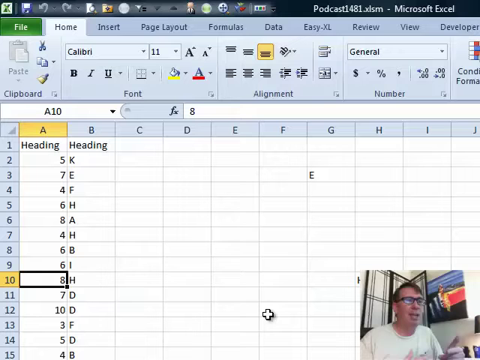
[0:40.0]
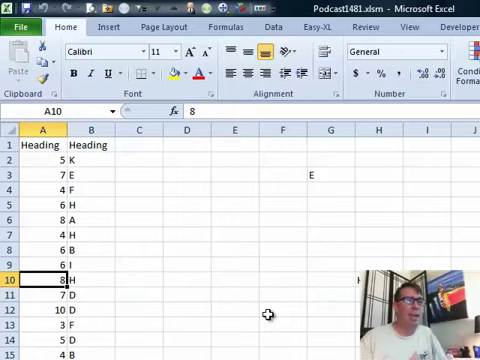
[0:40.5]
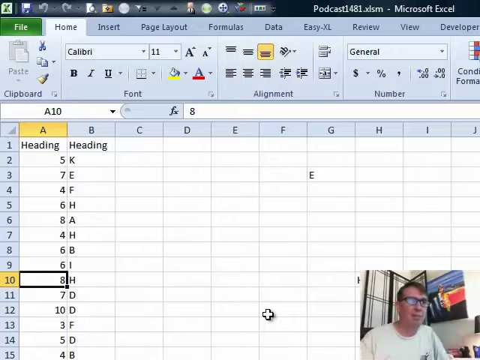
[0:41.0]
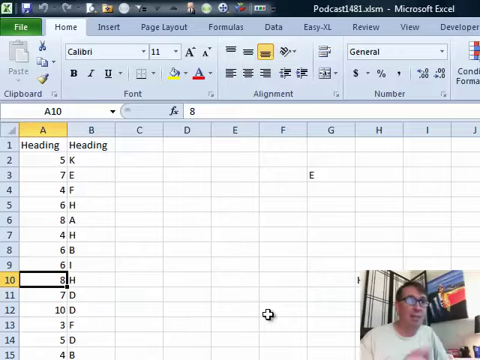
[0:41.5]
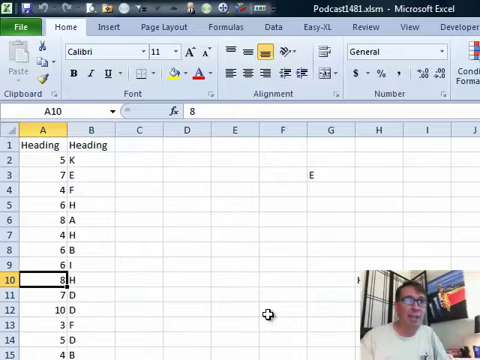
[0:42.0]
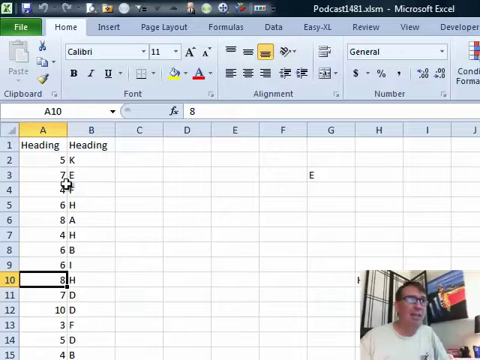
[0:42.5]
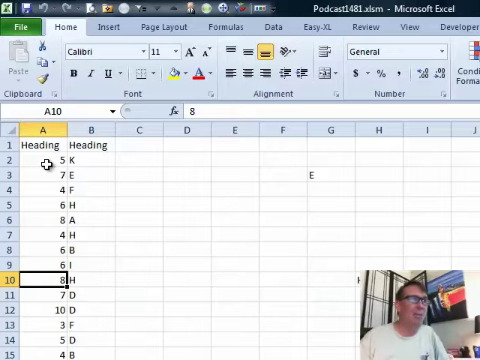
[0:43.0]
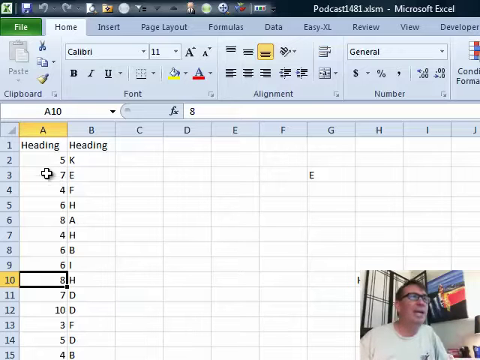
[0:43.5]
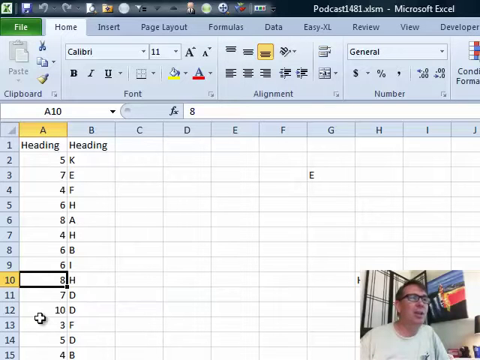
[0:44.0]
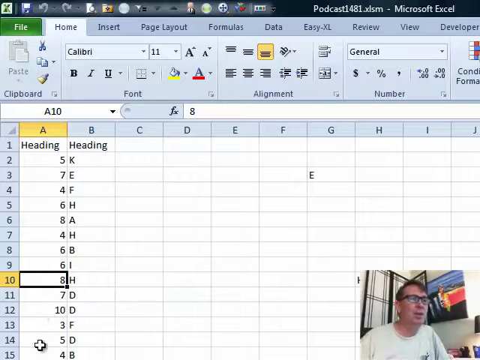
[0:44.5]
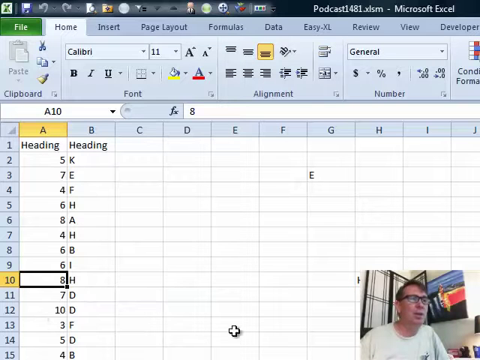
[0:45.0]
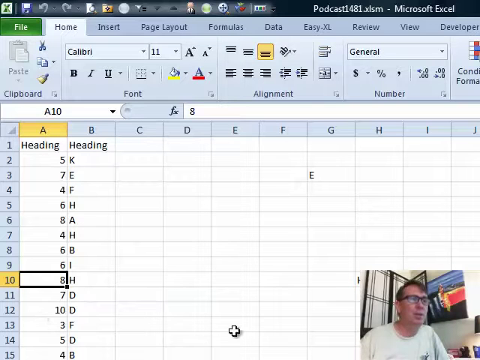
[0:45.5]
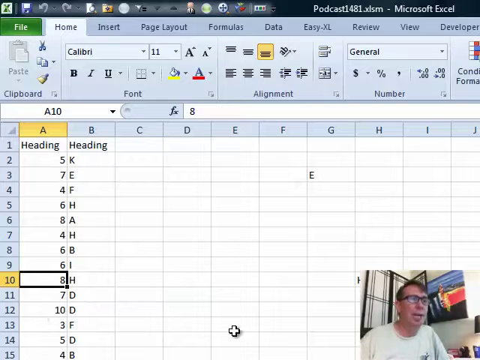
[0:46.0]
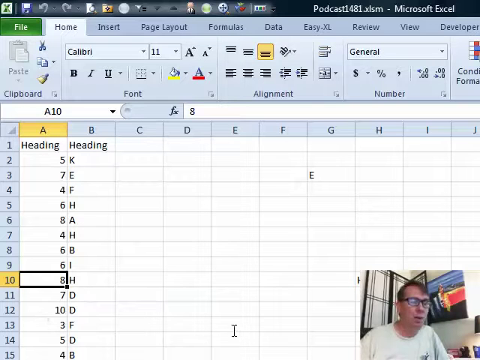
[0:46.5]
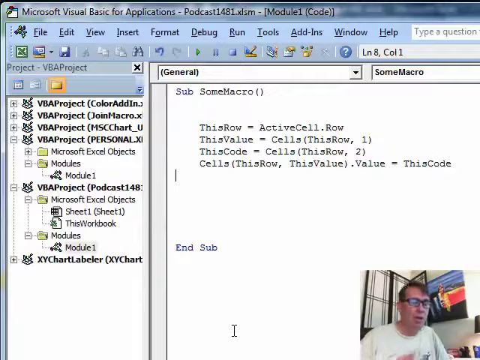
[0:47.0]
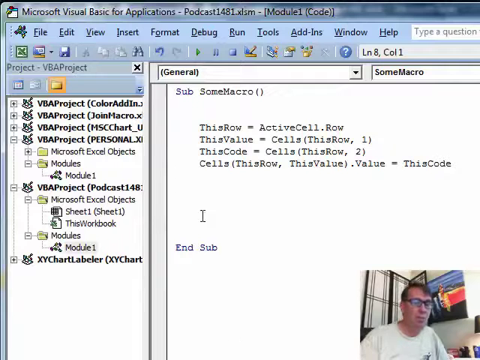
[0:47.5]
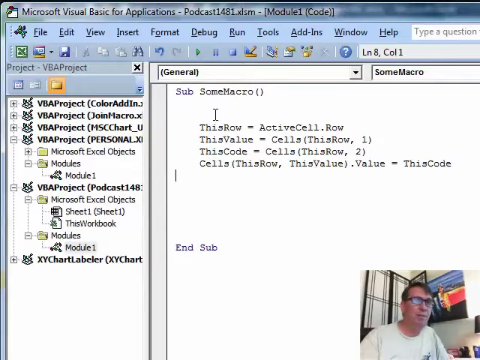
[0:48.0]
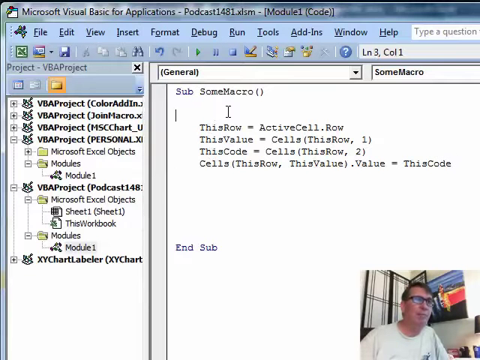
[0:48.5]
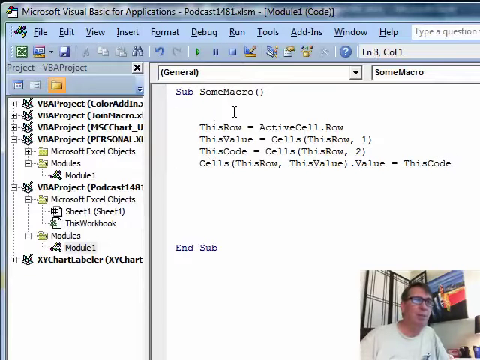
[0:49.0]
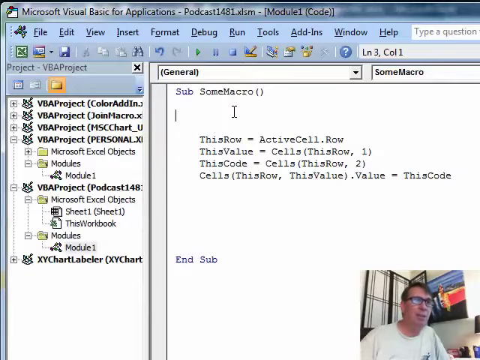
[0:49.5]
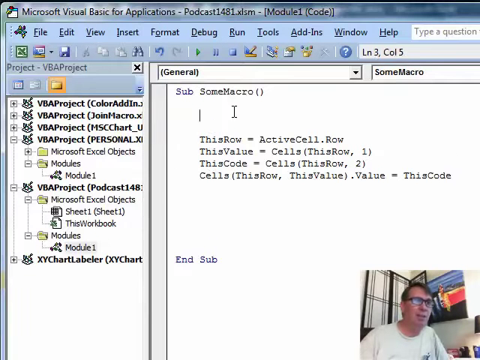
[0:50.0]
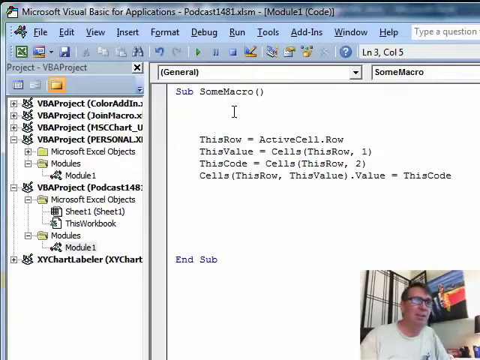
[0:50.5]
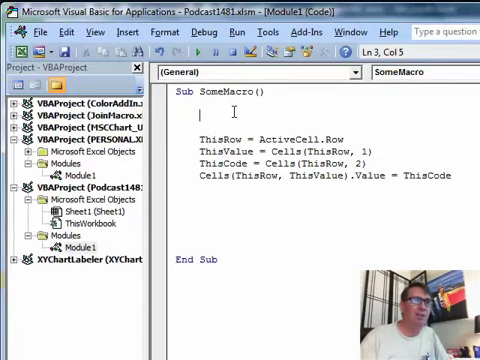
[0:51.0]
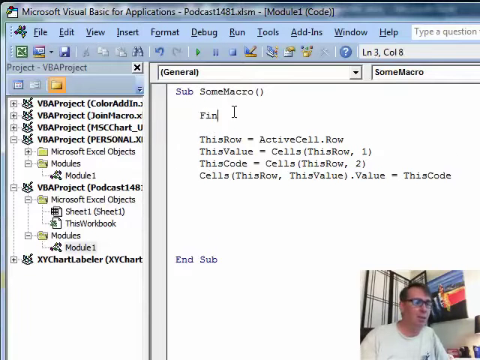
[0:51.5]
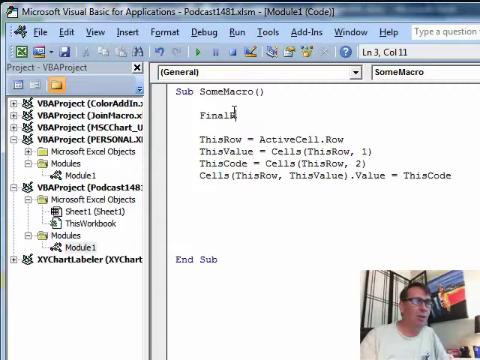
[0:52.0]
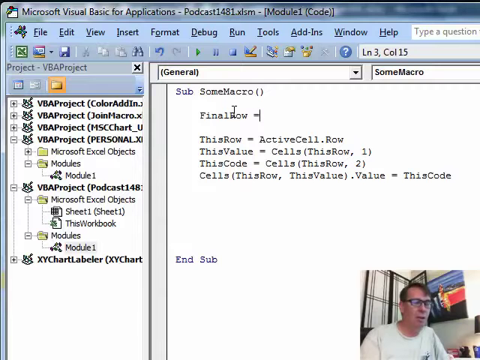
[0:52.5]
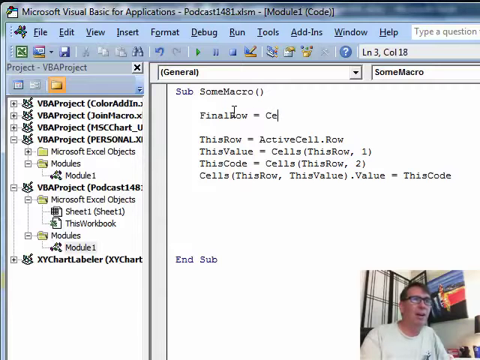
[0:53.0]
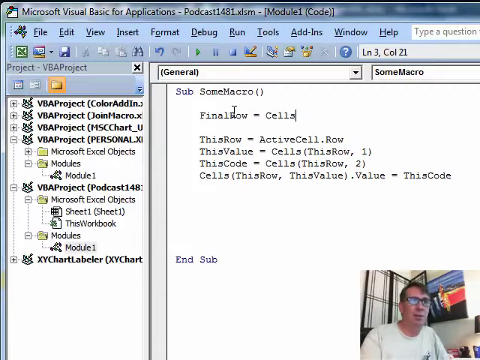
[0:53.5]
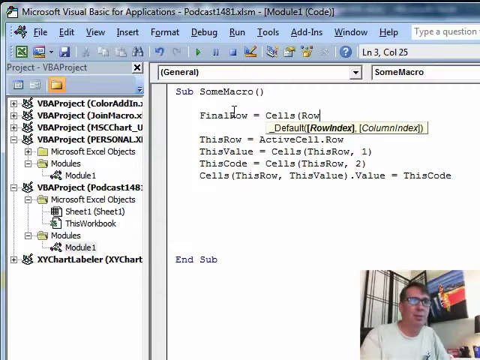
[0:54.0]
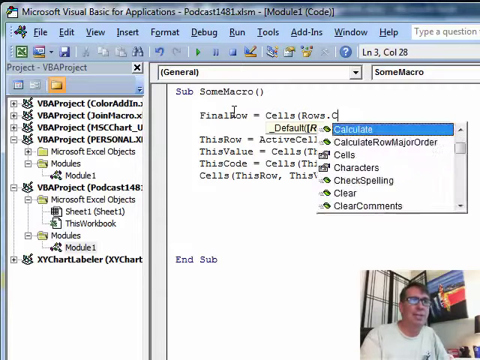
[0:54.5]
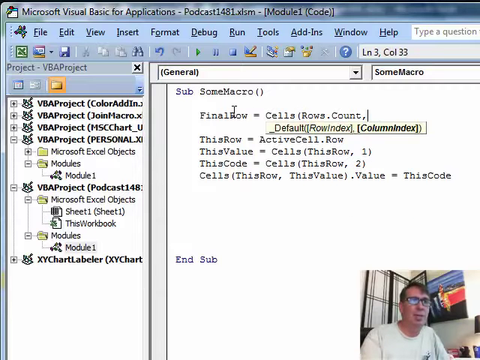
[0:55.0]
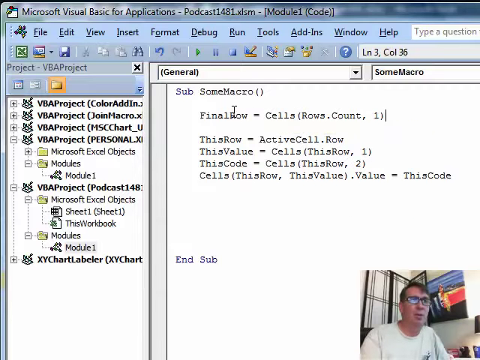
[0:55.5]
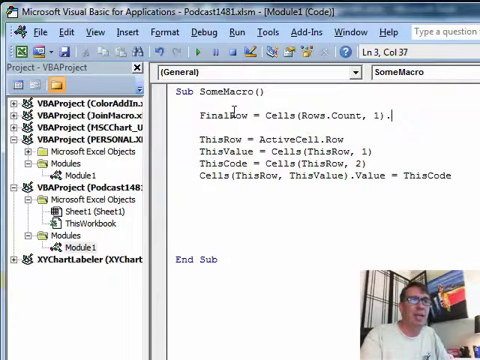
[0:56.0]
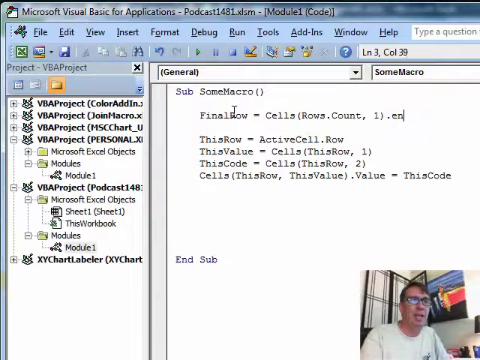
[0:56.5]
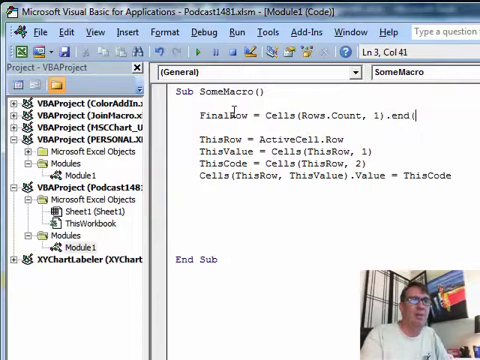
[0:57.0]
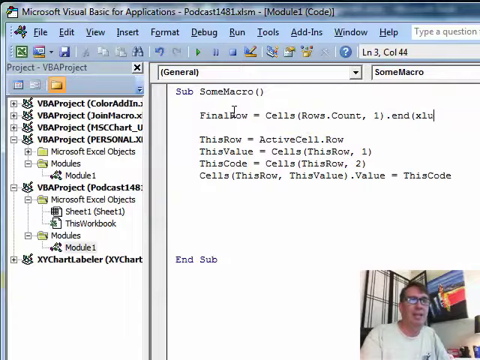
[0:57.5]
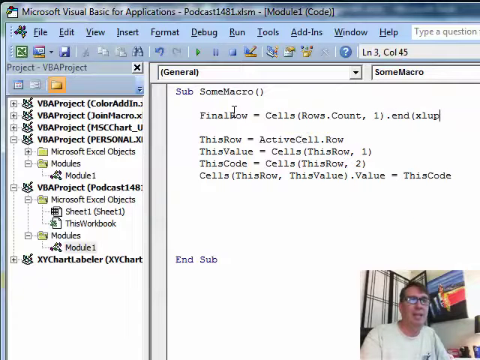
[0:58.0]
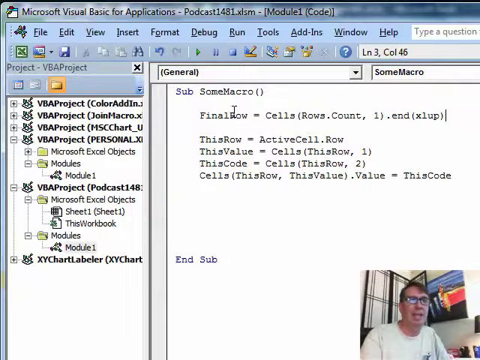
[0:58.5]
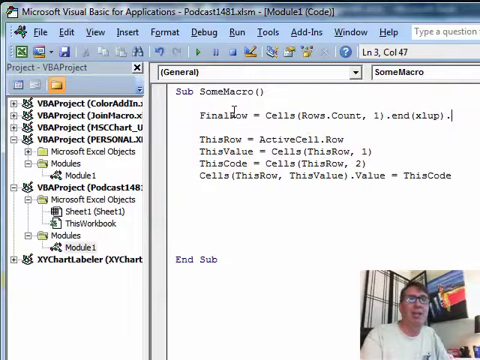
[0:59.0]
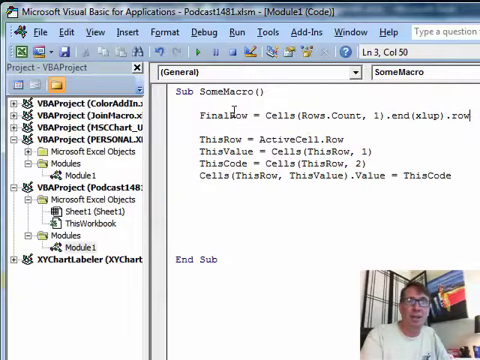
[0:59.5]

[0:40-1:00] A man in a box teaches how to use Excel. A spreadsheet is shown, and then the view goes into Visual Basic for Applications, with the text "VBA Project." He appears to be setting something up, seemingly a macro. He then goes back into a cell on the spreadsheet, where column A has numbers and column B has letters. He is a white man with brown hair, black glasses and a white shirt, and he is seen talking. Across the top are "file, home, insert, page layout, formulas, data, easy Excel, review, view" and "developer," along with the other Excel tools. The interface is blue, and the spreadsheet is white. There is a picture in the background of the picture-in-picture.